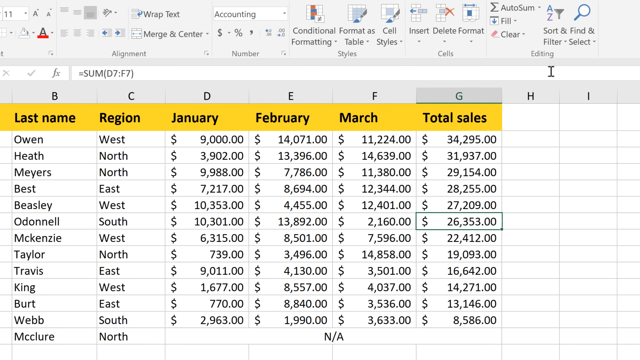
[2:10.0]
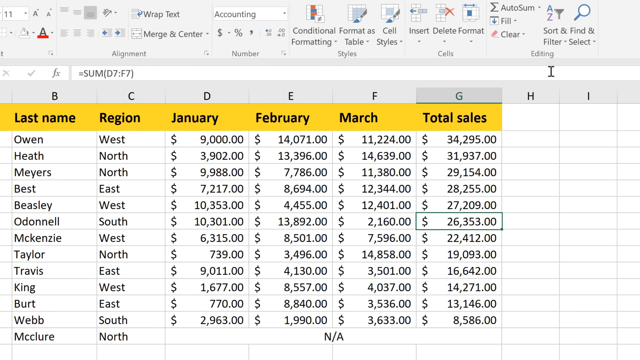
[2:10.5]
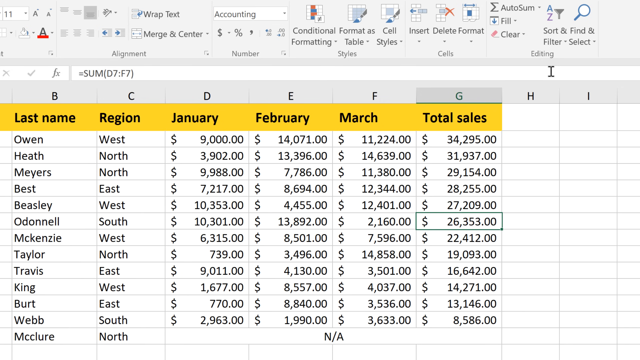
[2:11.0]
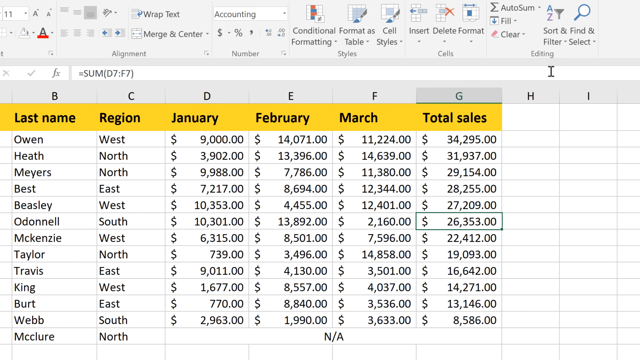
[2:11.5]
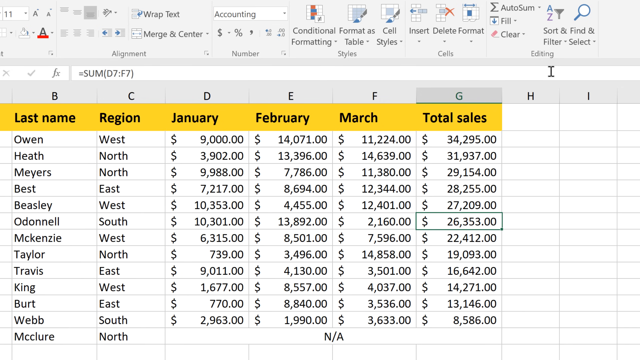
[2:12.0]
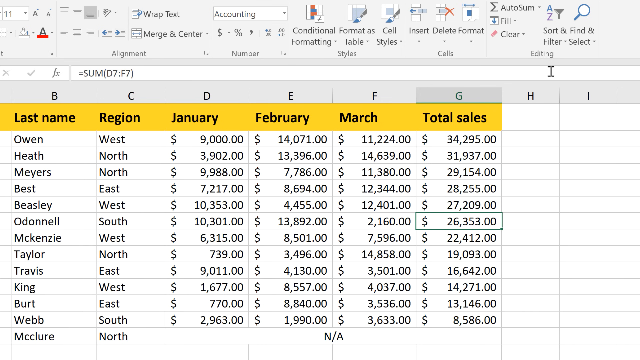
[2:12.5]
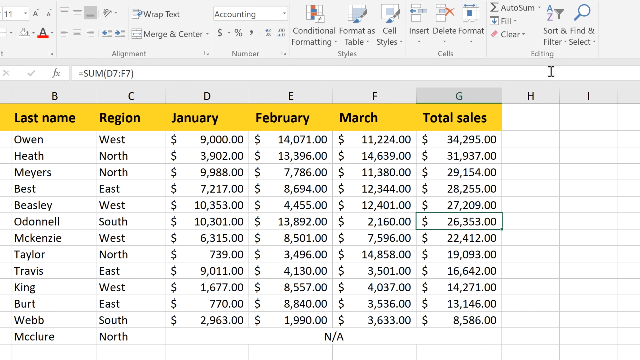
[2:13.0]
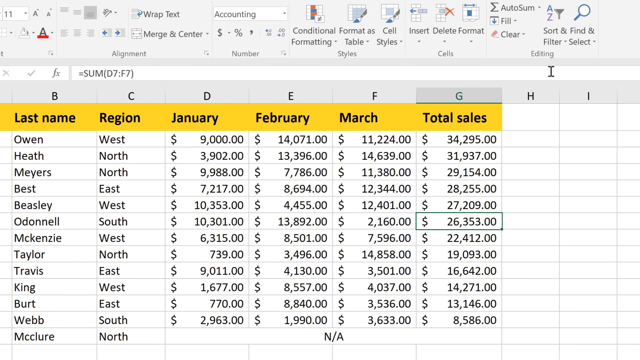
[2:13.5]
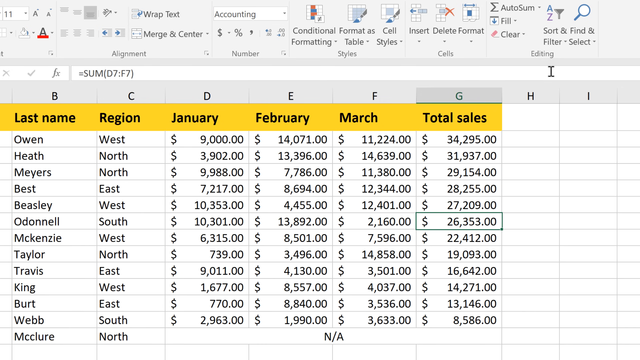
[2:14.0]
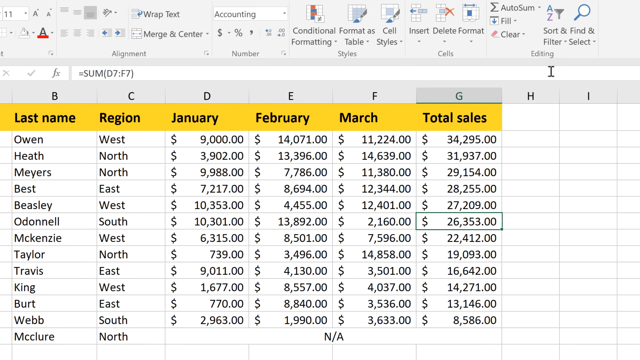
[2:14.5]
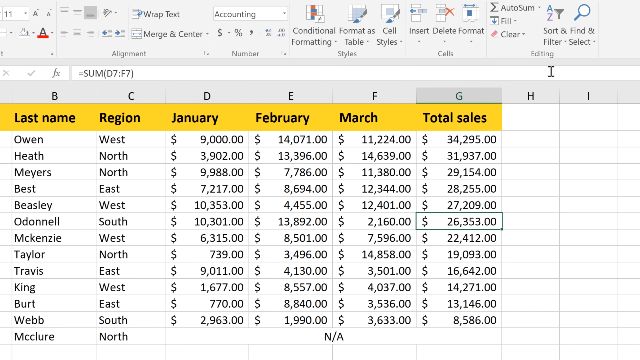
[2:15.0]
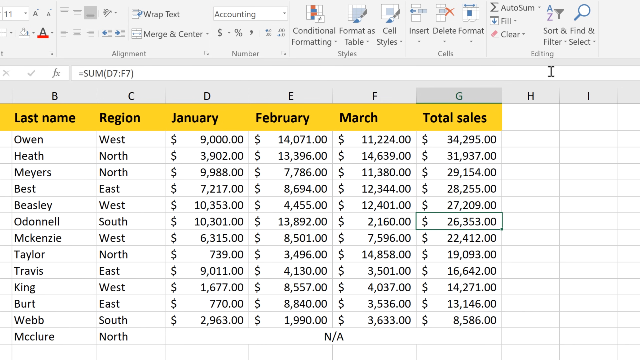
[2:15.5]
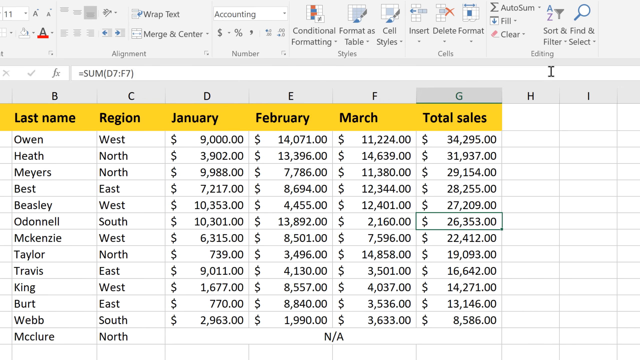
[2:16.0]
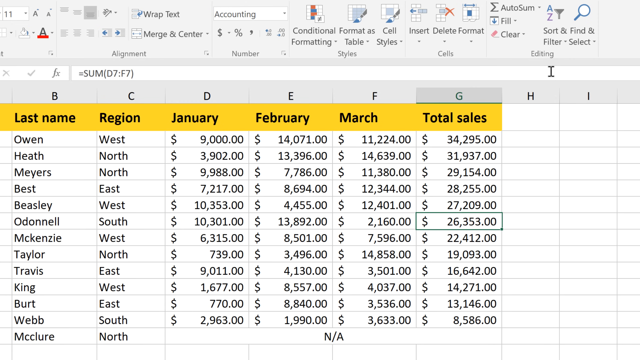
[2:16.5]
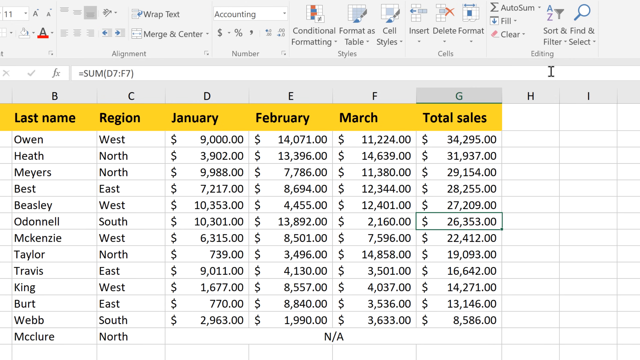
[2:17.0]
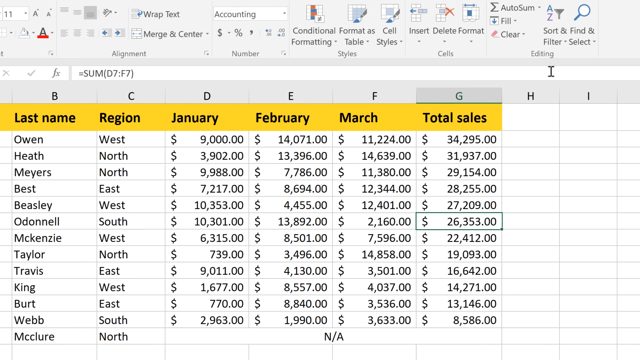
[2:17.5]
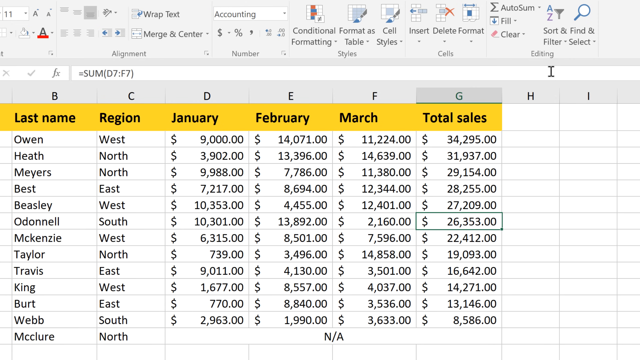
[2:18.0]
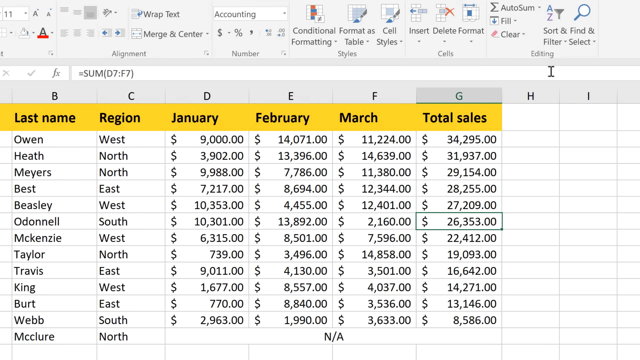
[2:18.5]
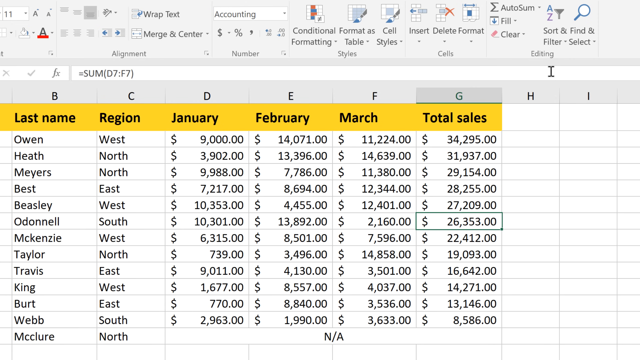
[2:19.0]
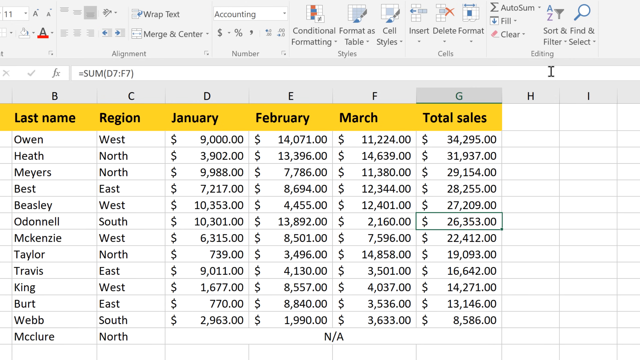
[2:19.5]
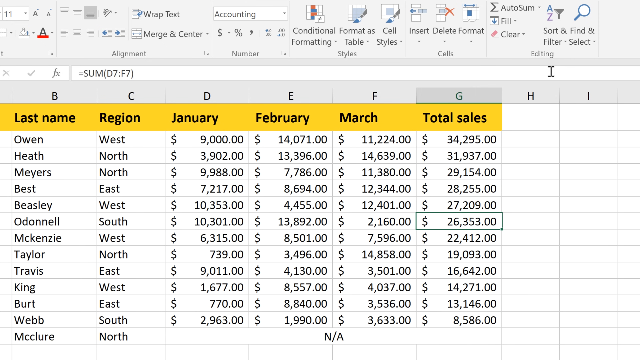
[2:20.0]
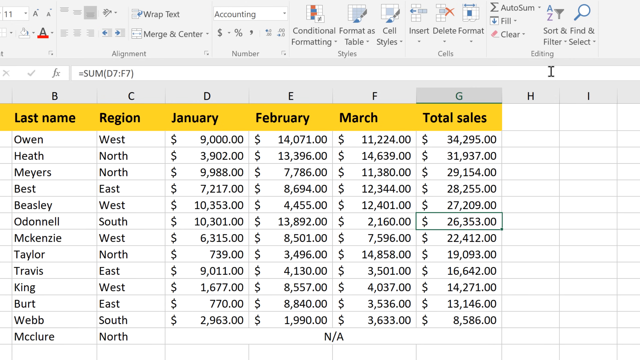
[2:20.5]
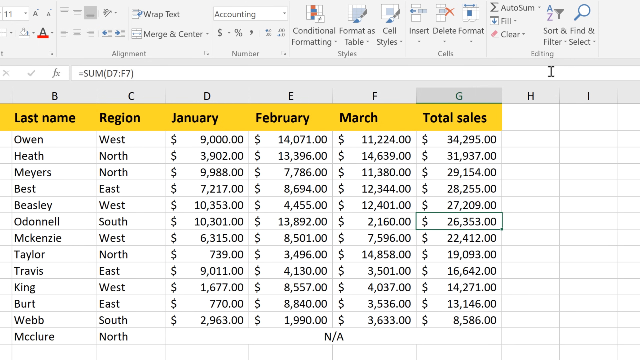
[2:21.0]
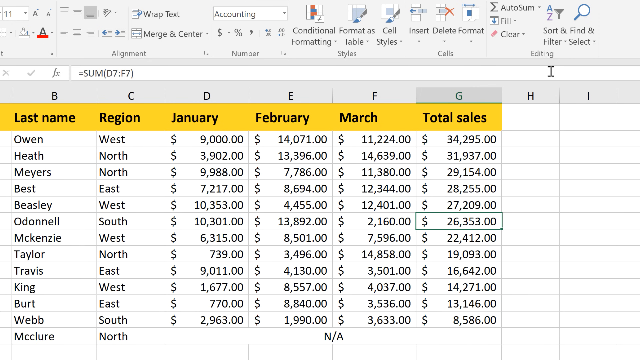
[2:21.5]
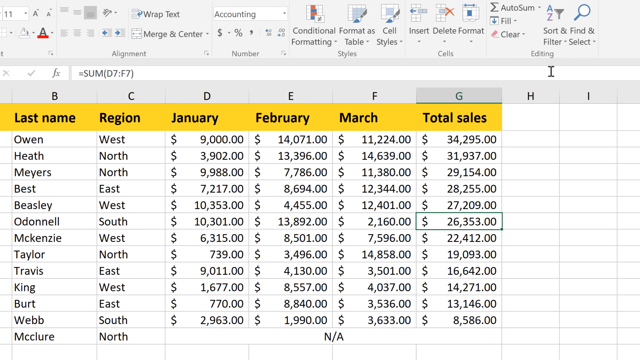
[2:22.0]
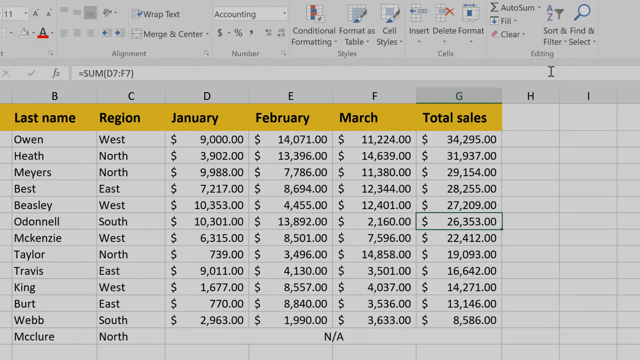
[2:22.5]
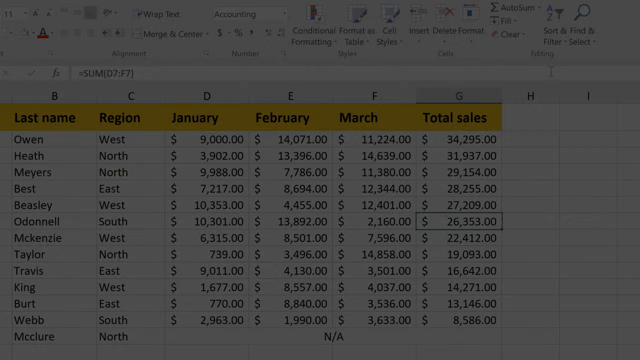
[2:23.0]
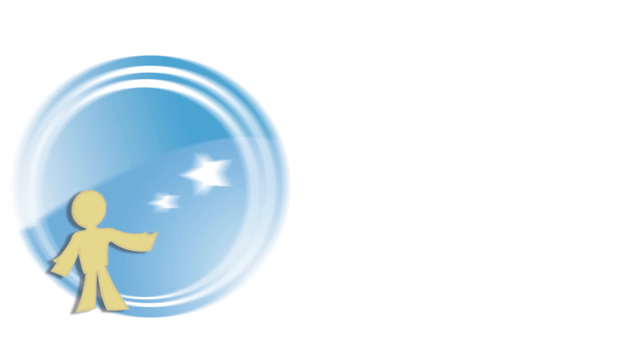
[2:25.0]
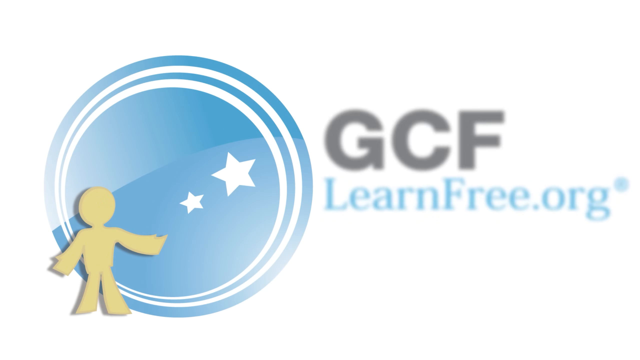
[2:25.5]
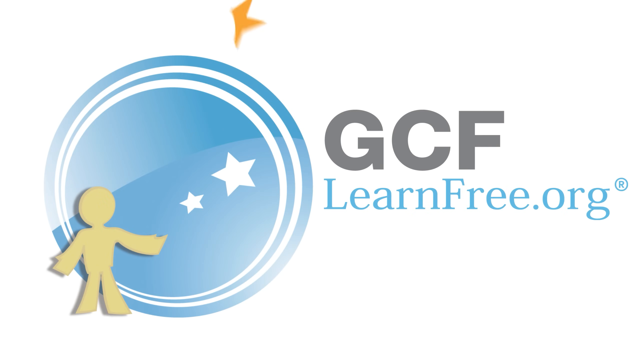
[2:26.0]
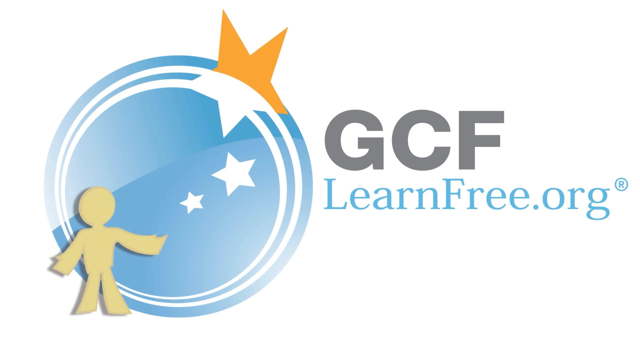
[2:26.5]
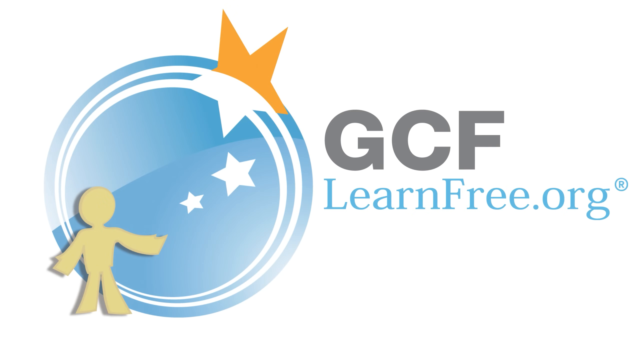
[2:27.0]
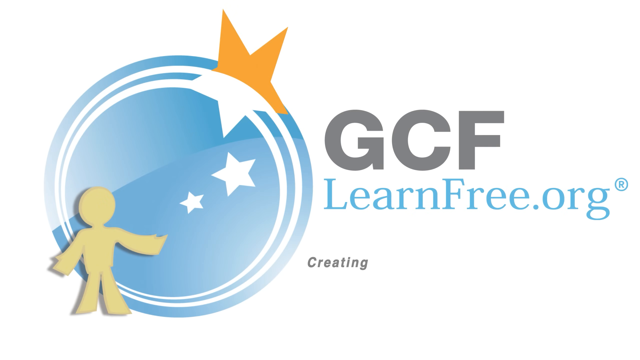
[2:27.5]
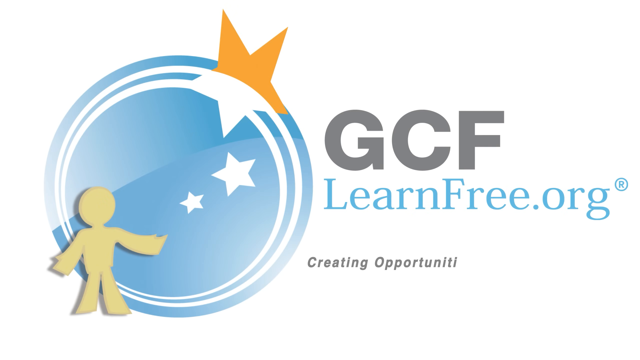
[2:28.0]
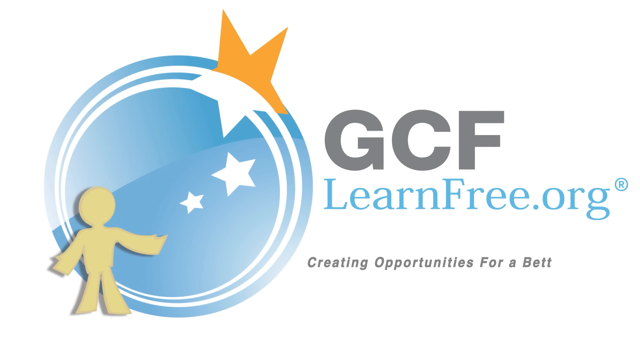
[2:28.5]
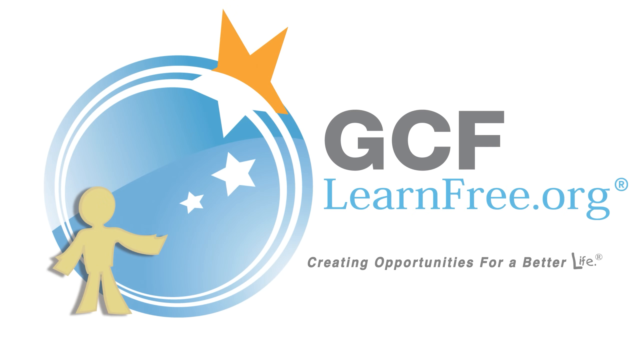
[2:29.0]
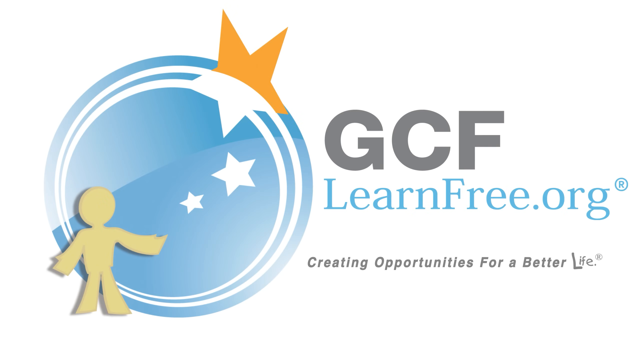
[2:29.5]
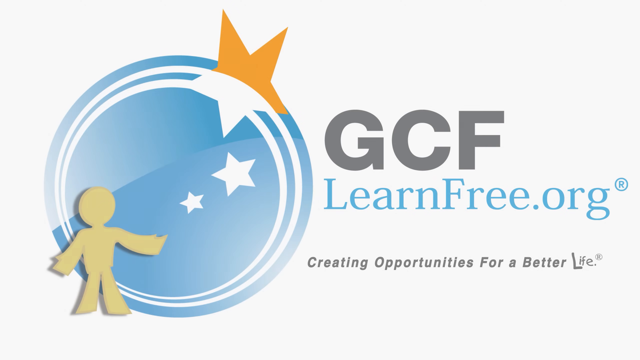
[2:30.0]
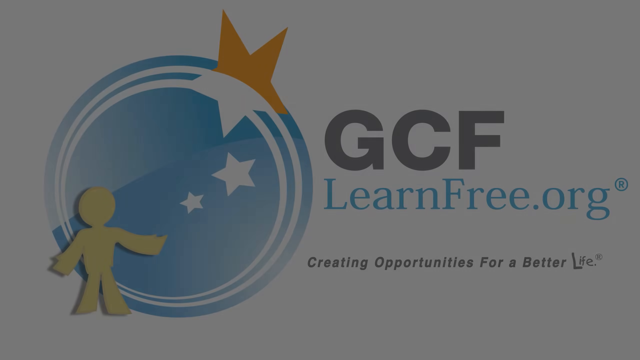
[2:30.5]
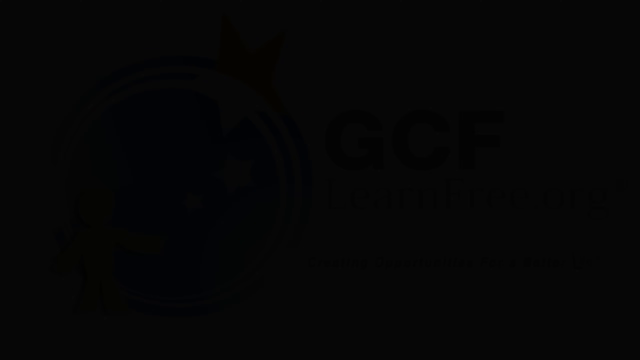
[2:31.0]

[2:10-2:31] The rearranged data remains in the table, with only the G column for the last name O'Donnell highlighted, showing "$26,353." The cursor appears to be out of the chart and is nowhere to be seen on the Excel page. The data stays the same for a while, then disappears and a closing screen appears reading "GCF LearnFree.org," with "LearnFree.org" in blue text. A logo shows a blue circle with two circular white lines, two white stars, a gold faceless stick figure at its bottom left corner, and a half orange, half white star at its top right corner. The text "creating opportunities for a better life" appears before the video ends. A white and gray background surrounds the video.